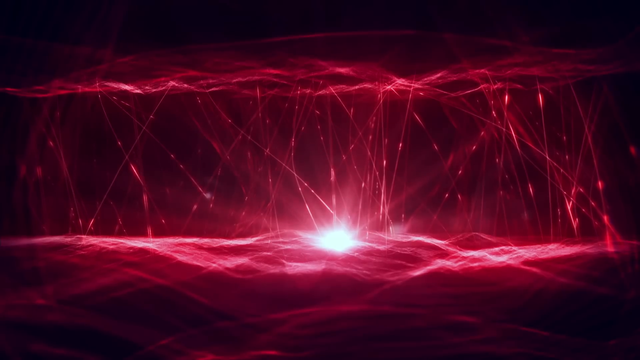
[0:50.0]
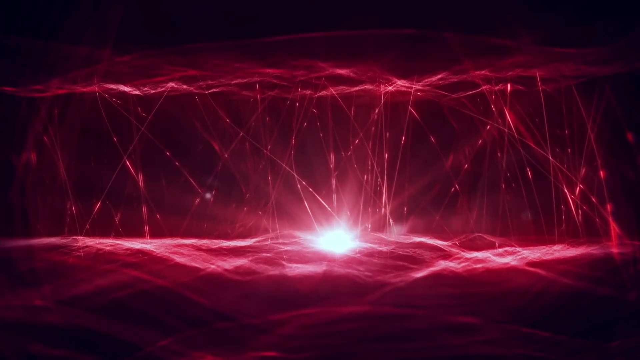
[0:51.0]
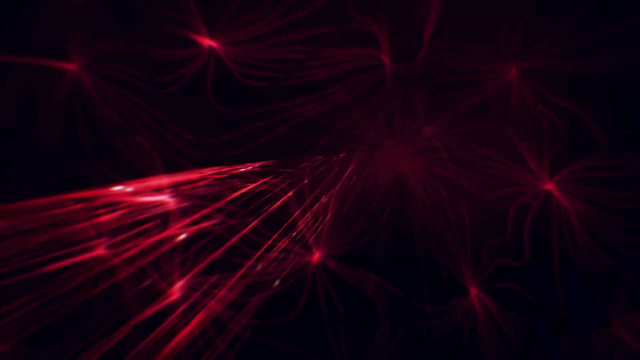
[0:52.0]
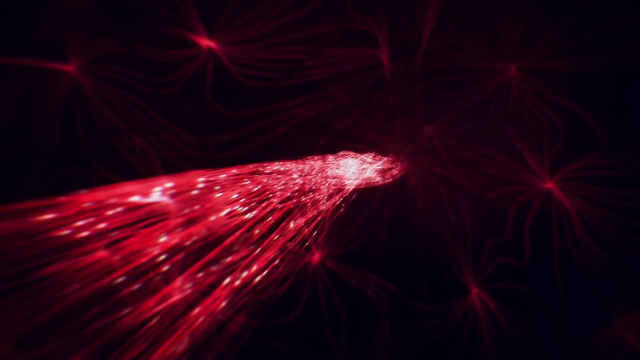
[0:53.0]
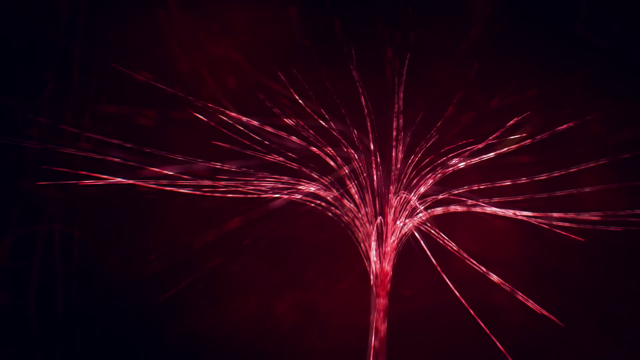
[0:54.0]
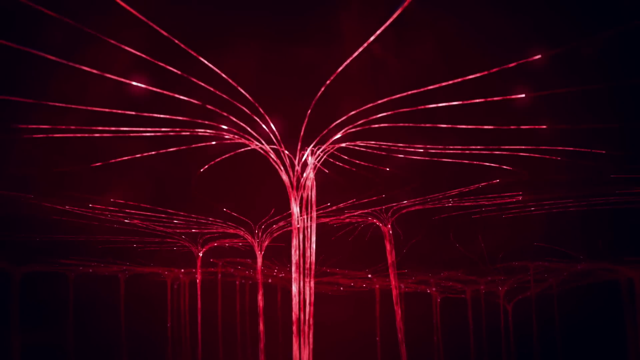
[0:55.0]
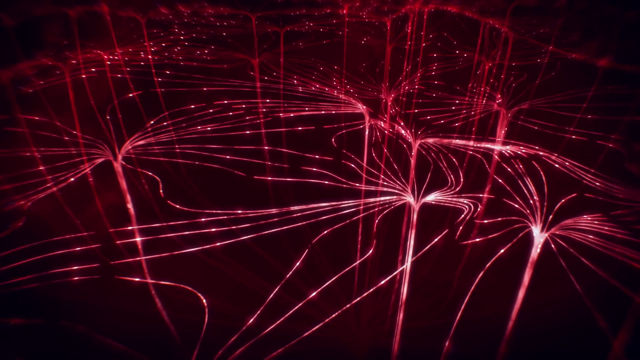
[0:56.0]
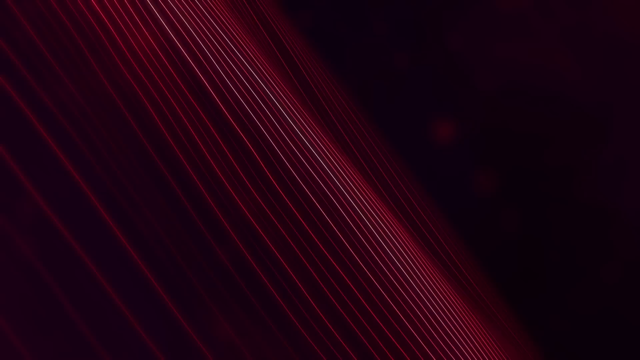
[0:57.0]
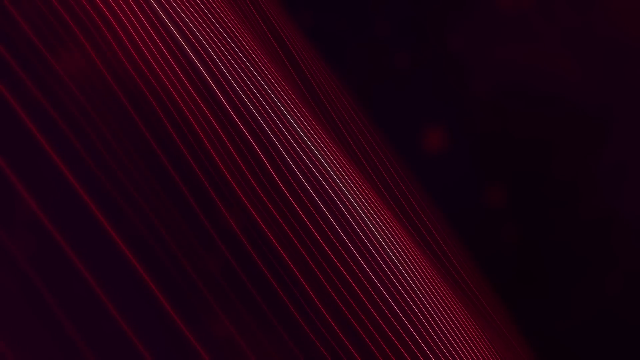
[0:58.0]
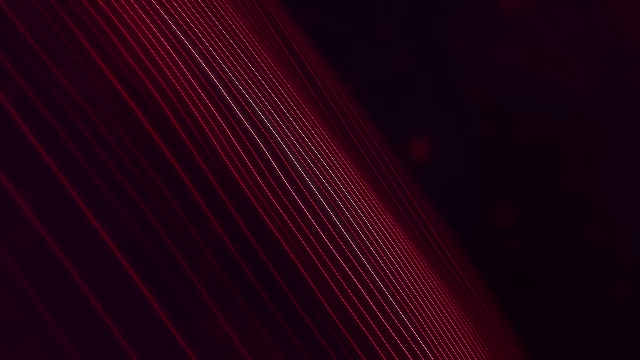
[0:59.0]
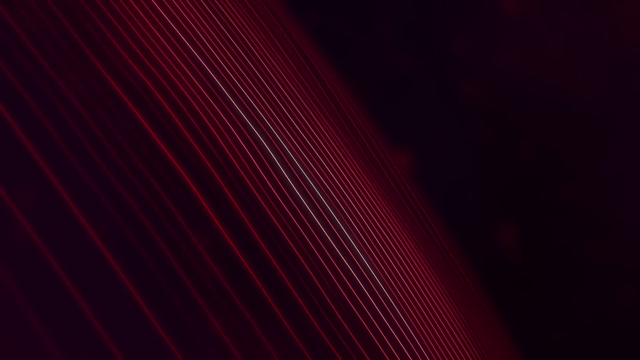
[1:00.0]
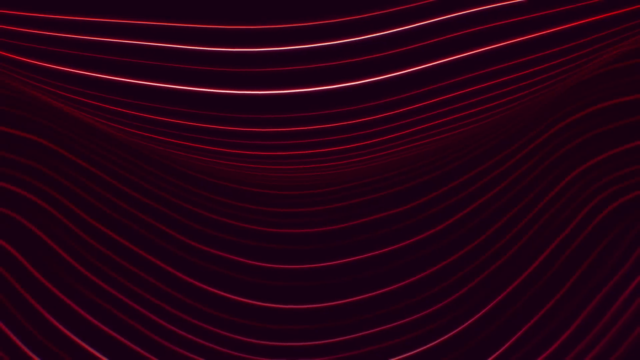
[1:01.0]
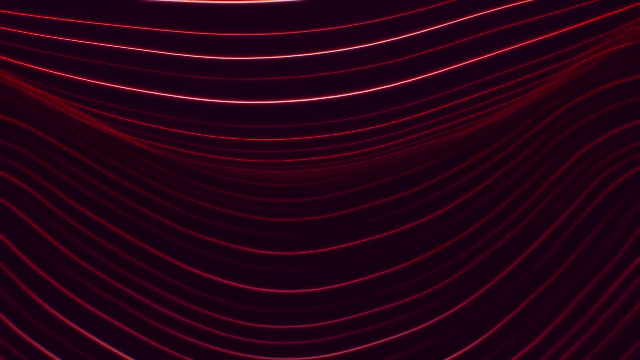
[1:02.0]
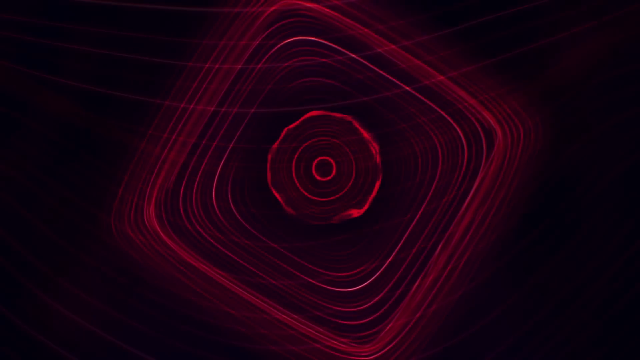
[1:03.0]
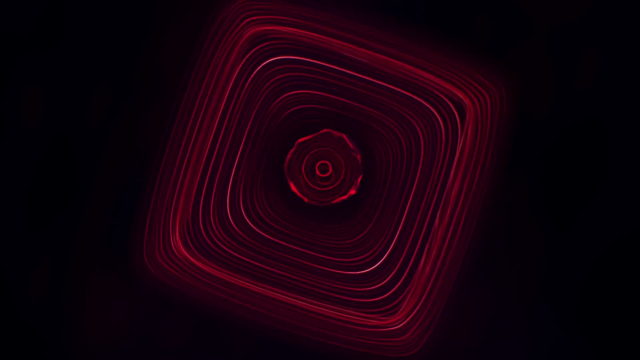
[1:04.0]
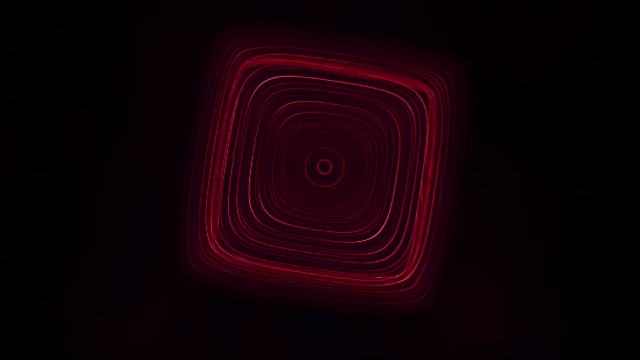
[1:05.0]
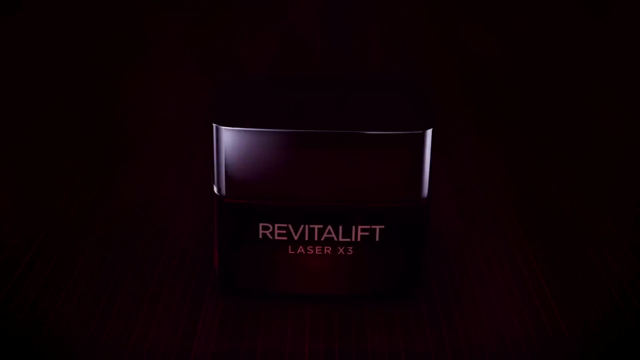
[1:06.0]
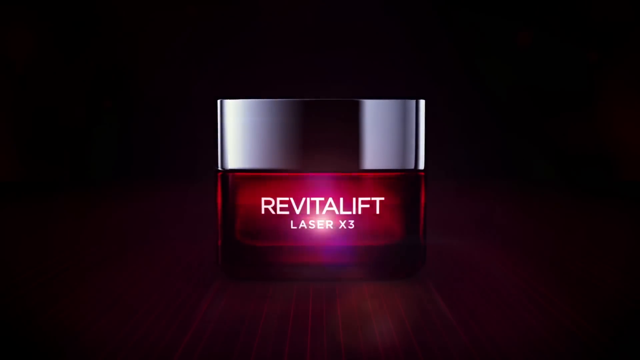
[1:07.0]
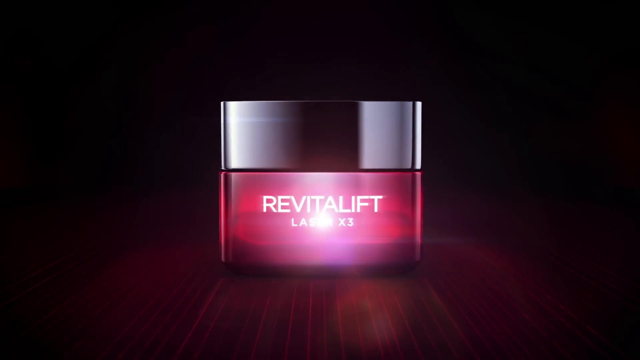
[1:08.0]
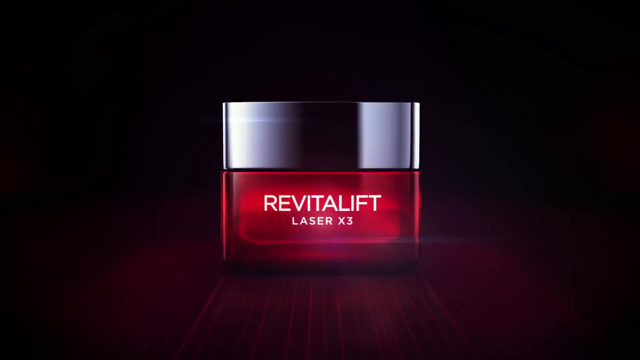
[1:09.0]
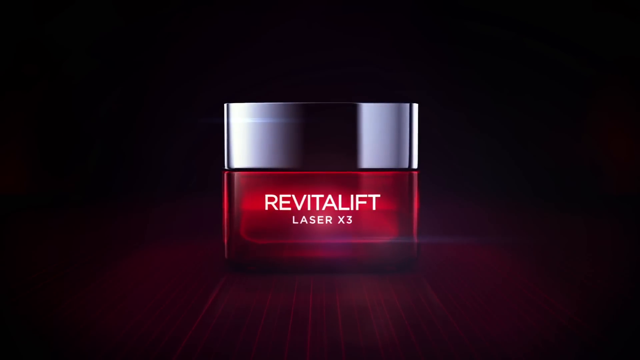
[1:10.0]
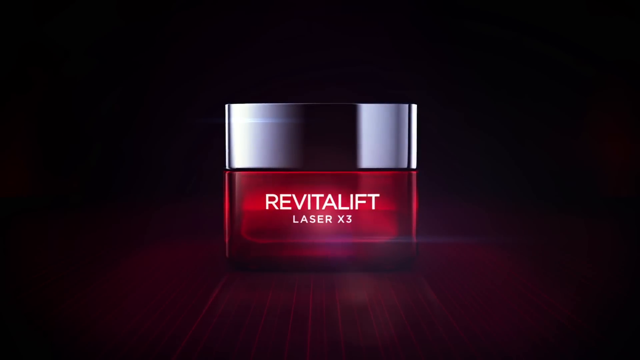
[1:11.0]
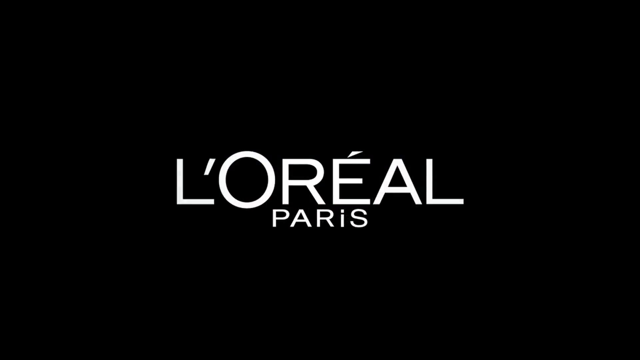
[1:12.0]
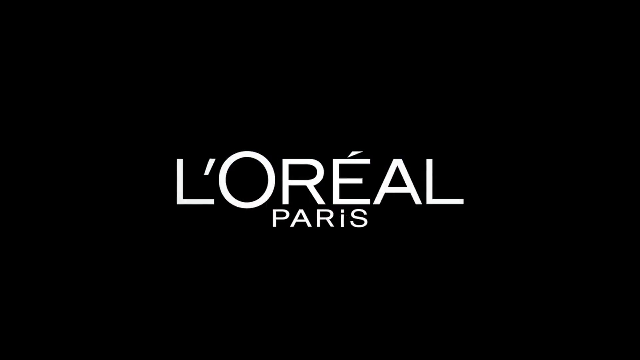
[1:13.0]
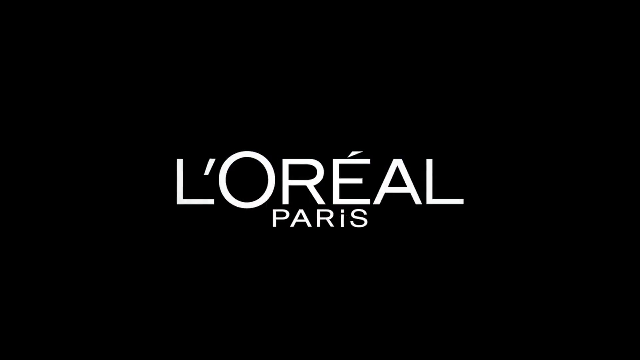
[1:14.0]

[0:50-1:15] A glowing white light is toward the middle but lower portion of the frame, with lines that shoot up like land and hills, mostly the same red burgundy color. Something almost like a tree shoots out colors and fans out like trees that connect, almost filling a forest. Some lines go diagonally from the upper left-hand corner down to the lower right-hand corner, and others are more horizontal in the black middle portion, stretched out wide from left to right but looping down a little in the middle. Then there is kind of a spinning cube made of squares, which kind of tips forward and turns out to be a bottle that says "Revitalift laser x3". The lid looks silver or gray, and the word "Revitalift" looks red burgundy. A ball almost seems to glow right in the middle of it, and then it disappears. "L'Oreal Paris" appears, with a hyphen right after the first L and a little marking over the E, and "Paris" at the bottom.